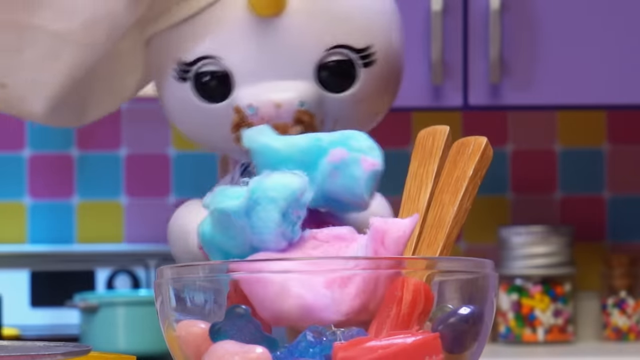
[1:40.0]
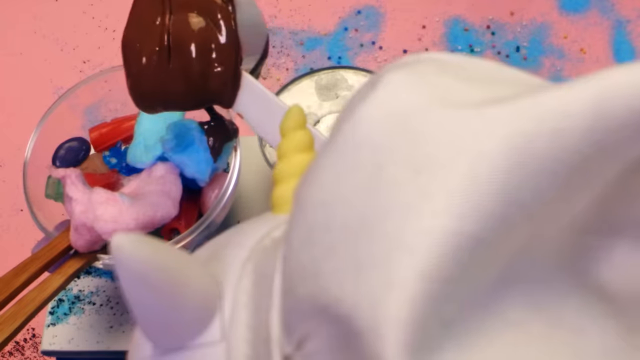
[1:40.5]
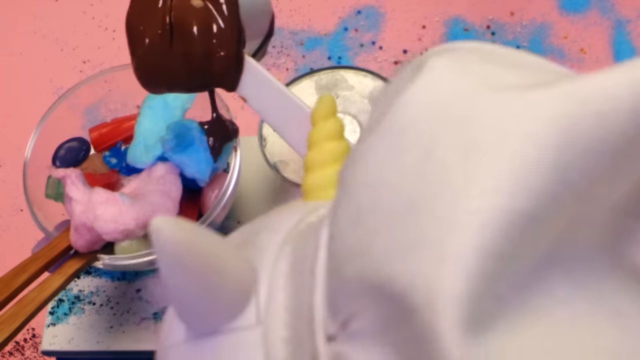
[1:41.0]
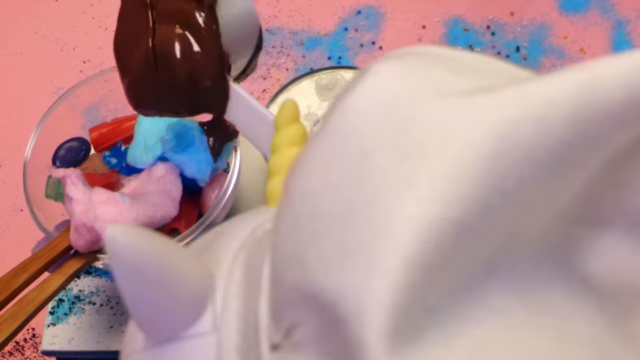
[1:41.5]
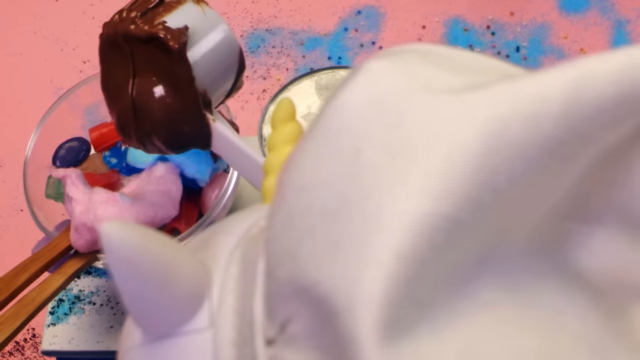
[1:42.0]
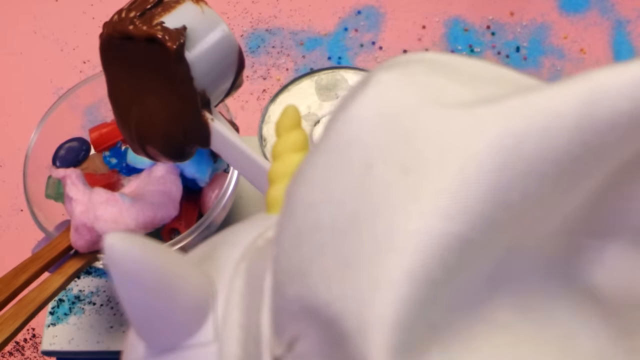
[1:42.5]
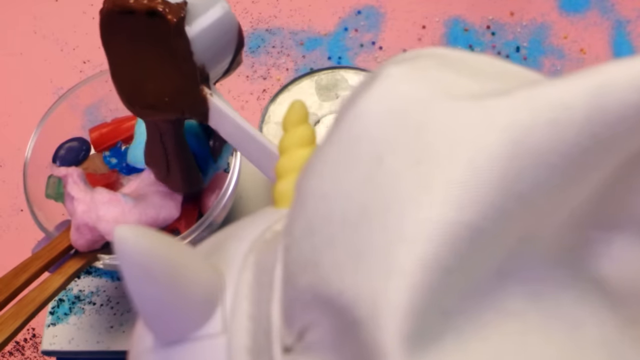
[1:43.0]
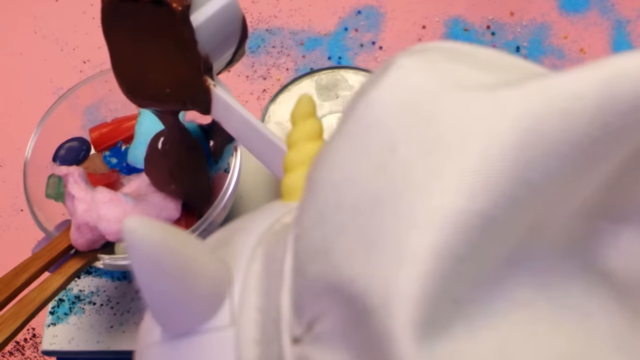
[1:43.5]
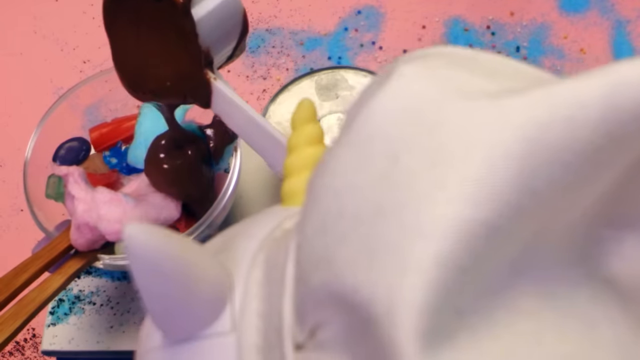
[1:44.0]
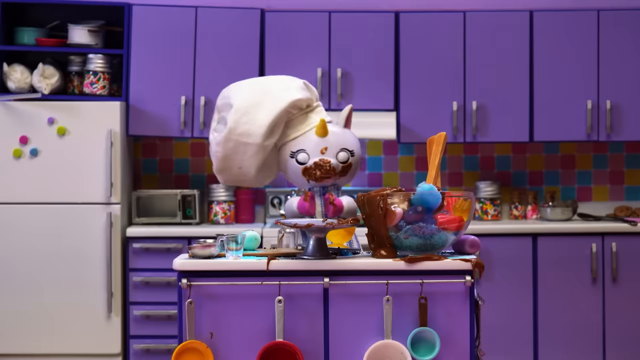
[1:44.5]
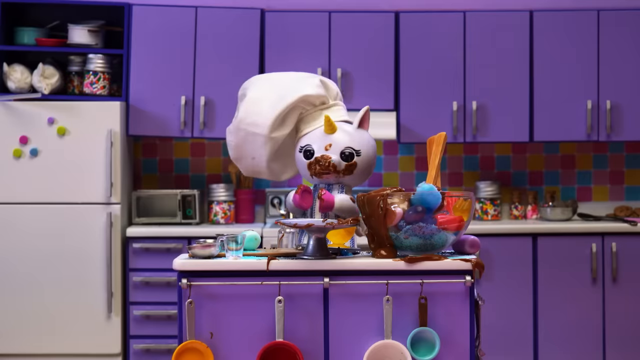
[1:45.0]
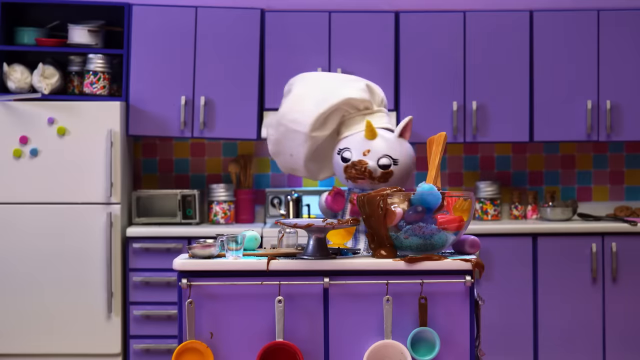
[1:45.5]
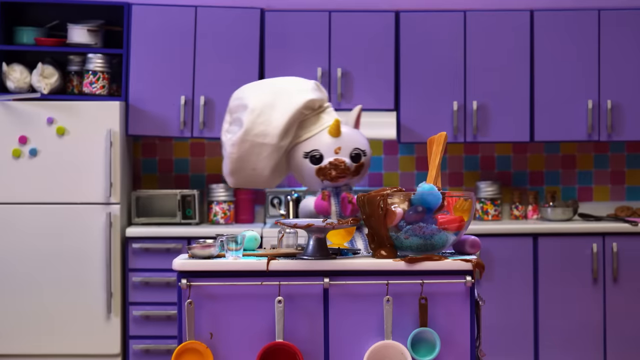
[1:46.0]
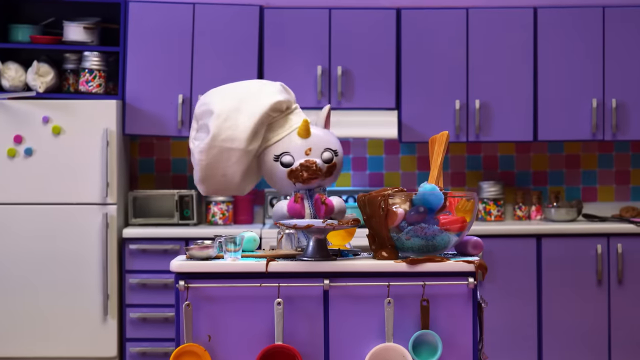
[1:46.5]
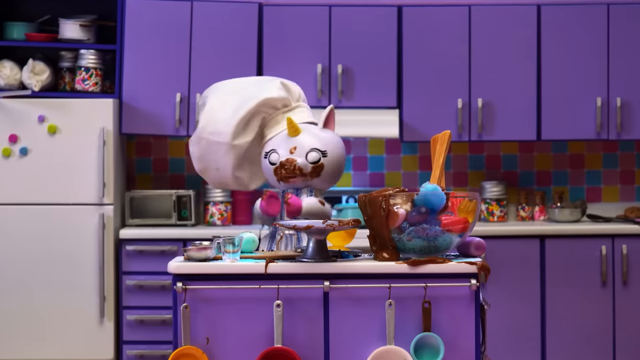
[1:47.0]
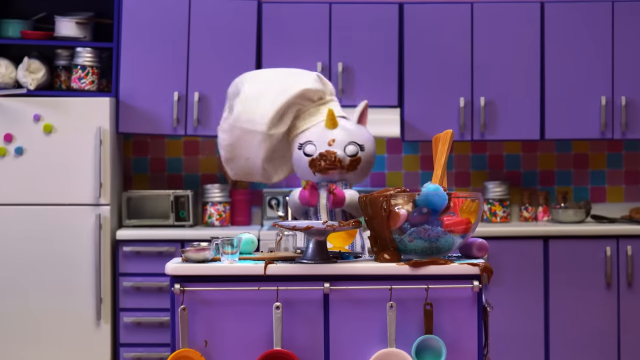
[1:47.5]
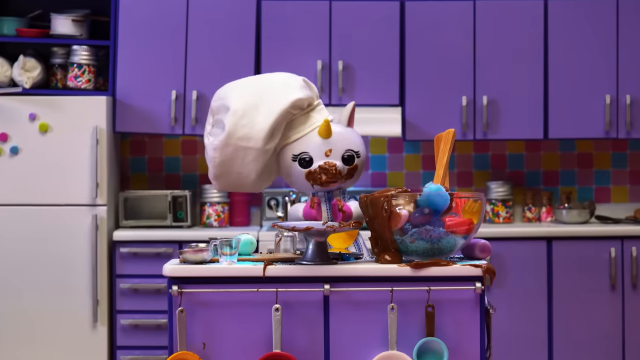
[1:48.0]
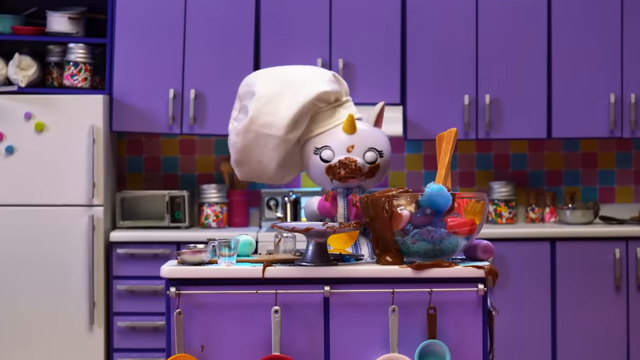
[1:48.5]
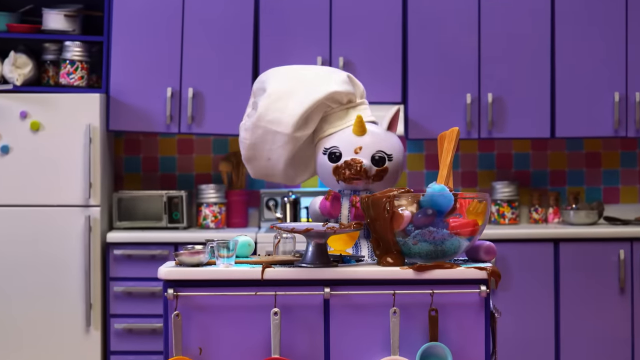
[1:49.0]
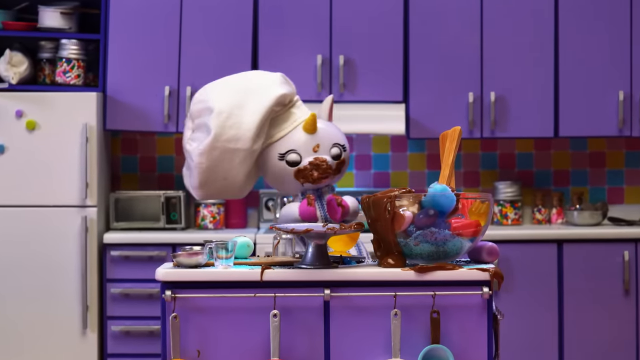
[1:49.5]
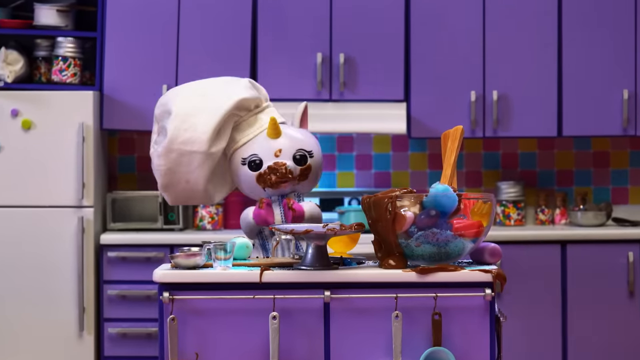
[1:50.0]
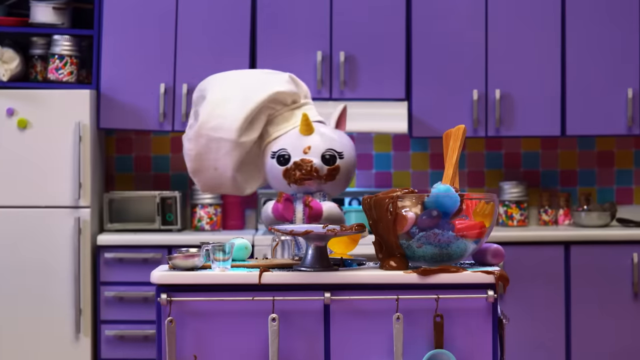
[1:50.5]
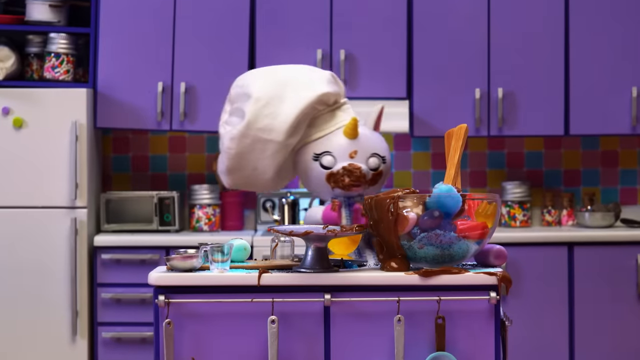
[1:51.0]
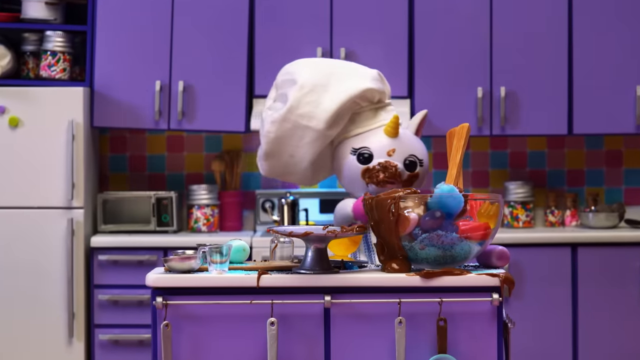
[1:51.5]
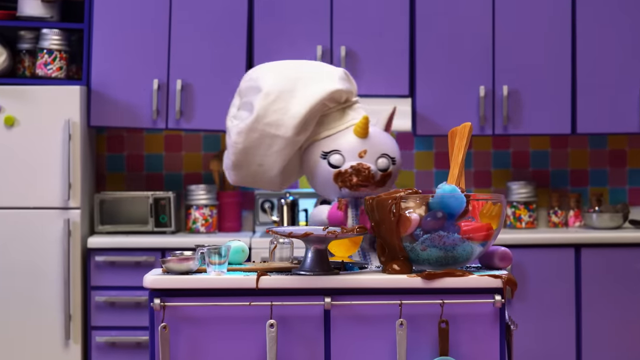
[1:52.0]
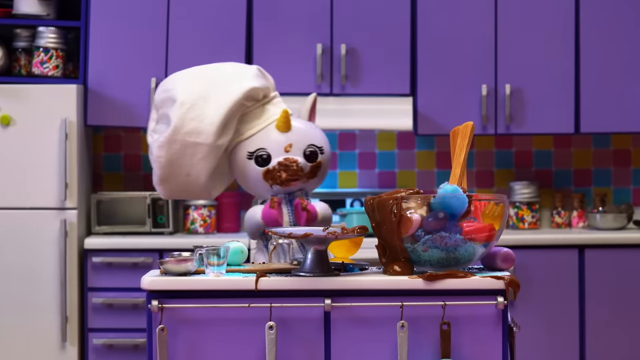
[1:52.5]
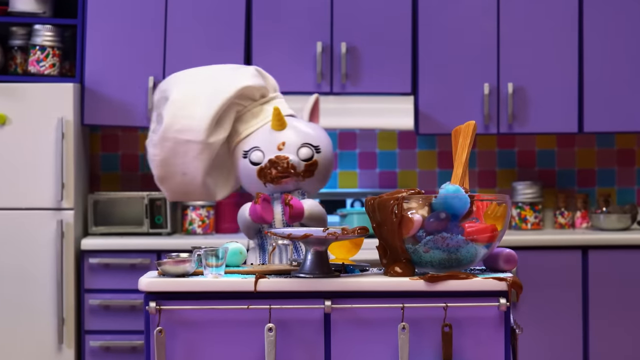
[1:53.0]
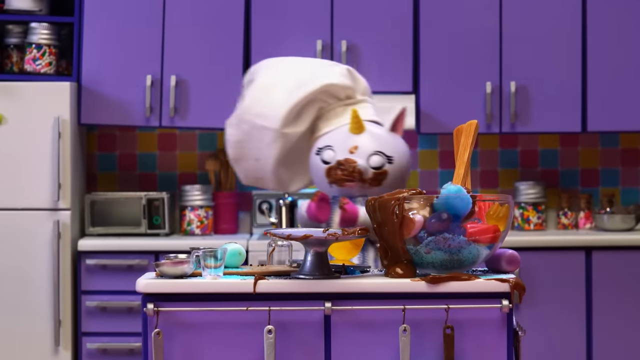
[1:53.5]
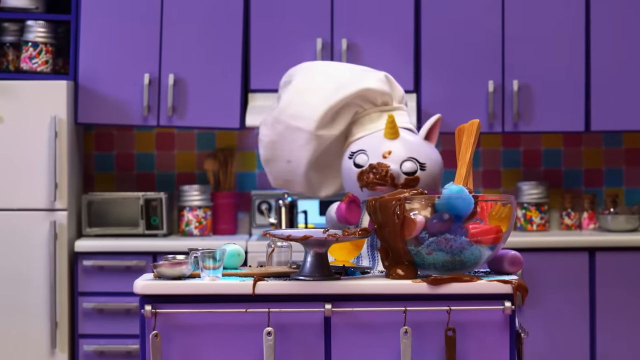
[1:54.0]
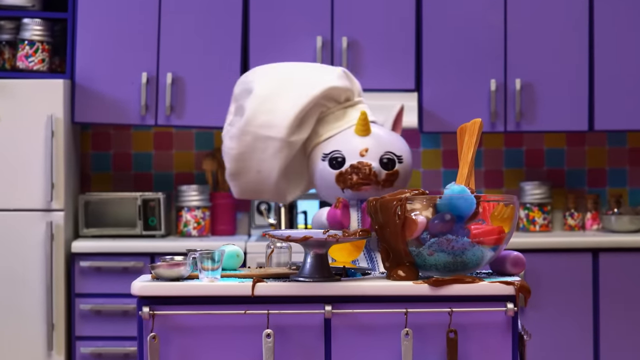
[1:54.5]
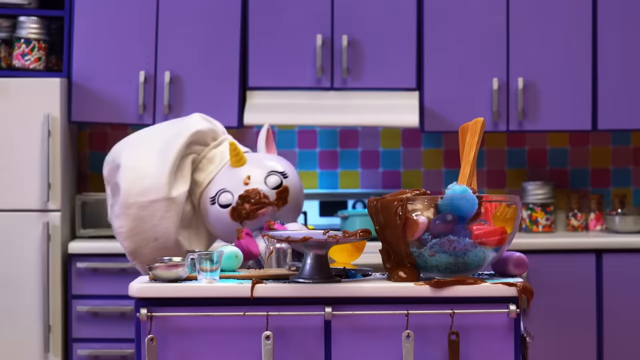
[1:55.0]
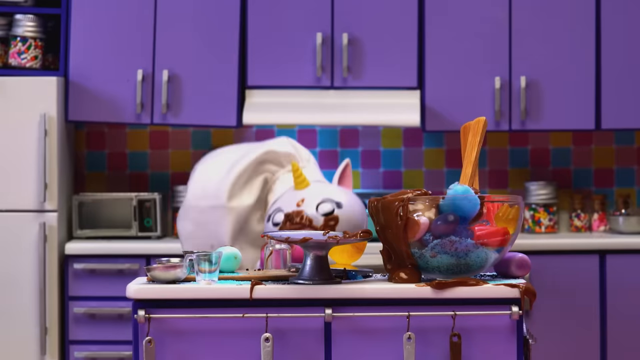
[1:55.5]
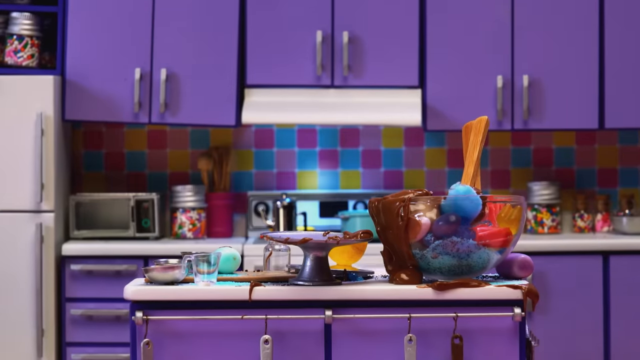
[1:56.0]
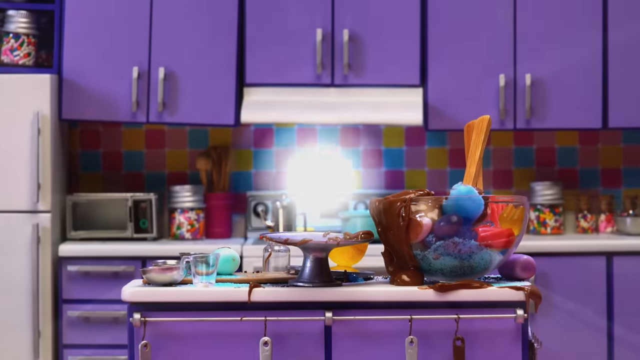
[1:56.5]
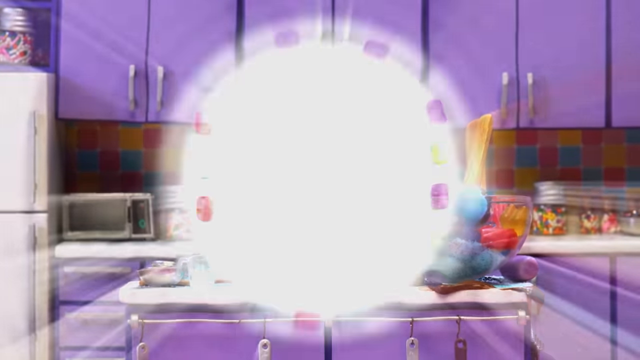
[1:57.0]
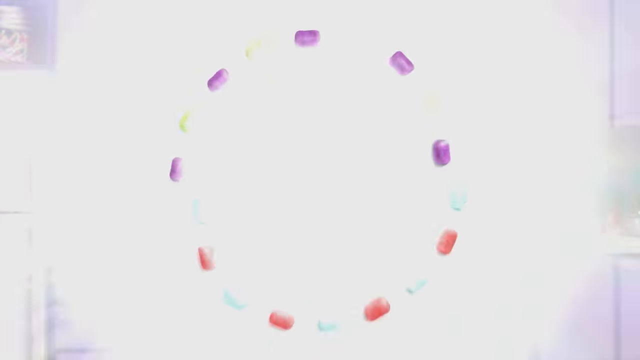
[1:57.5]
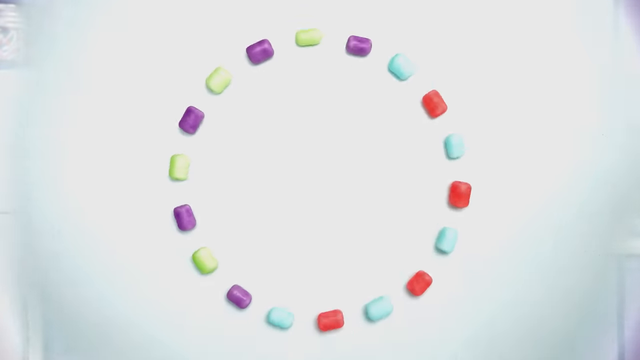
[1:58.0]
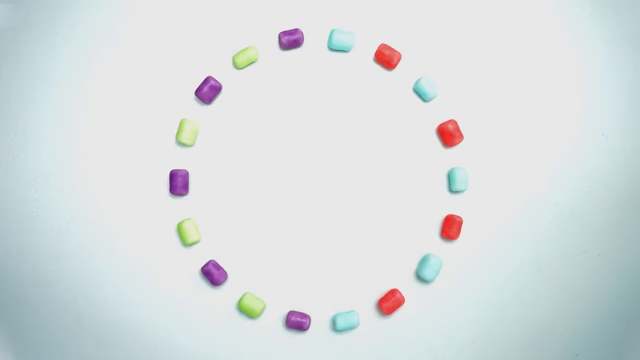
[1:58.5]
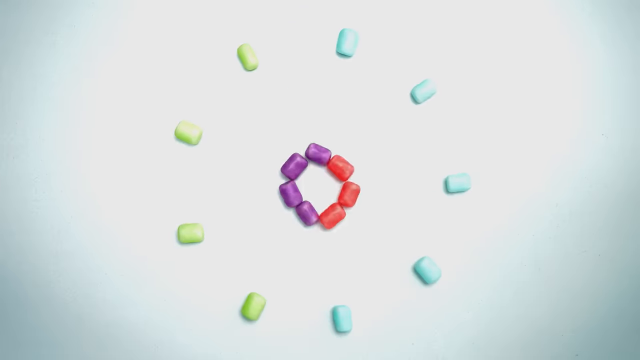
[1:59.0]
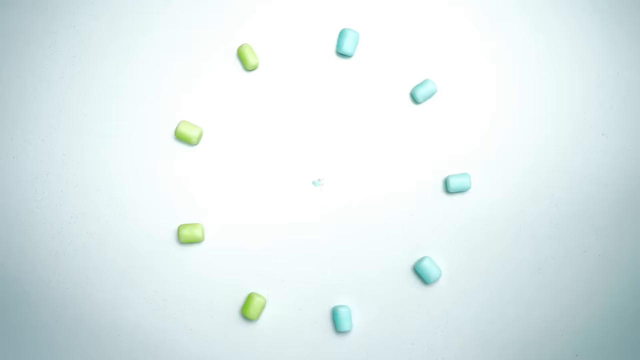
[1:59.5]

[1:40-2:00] The camera cuts to an overhead shot from above the unicorn's head, with her chef's hat at the bottom of the frame and her horn visible. She holds what appears to be a measuring cup of some sort, filled with what looks like maybe chocolate syrup, and slowly pours it into the glass bowl from the top. The camera cuts back to the original image of her behind the counter with the kitchen in the background. The glass bowl looks a mess: chocolate syrup is poured all down its side, candy is on the outside of the bowl, and cotton candy hangs off the top. Chocolate is everywhere on the counter and all over her face and hooves. In front of her, next to the glass bowl, there is now what appears to be a cake stand, and she moves back and forth, speaking. There are also a measuring cup and some of the empty metal and plastic bowls she used to pour things into the bigger glass mixing bowl; the entire counter is a mess. She closes her eyes and slowly moves down until she can no longer be seen, almost as if she is passing out or being dramatic. In the center of the screen a white circle starts to grow and takes over the whole screen, seemingly a bright light, and candies, purple and green and then blue and red, circle in the middle of the screen. The blue ones kind of move into the middle, like a design or almost as if the candies are dancing.